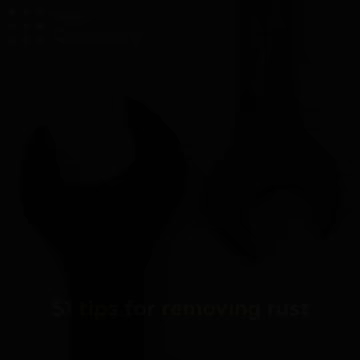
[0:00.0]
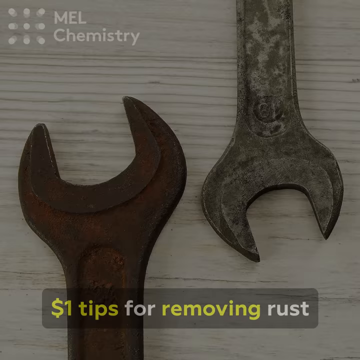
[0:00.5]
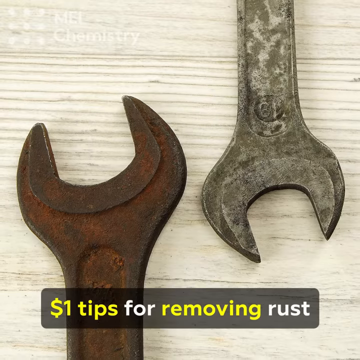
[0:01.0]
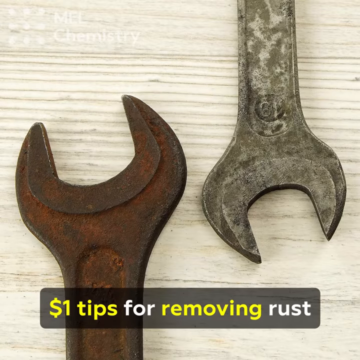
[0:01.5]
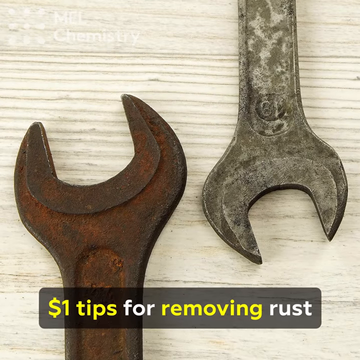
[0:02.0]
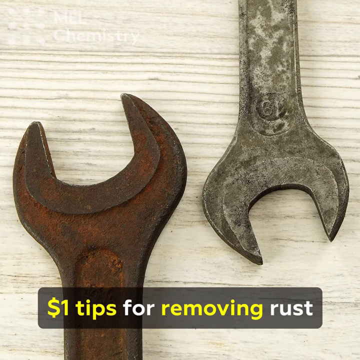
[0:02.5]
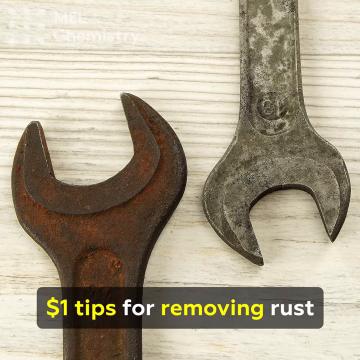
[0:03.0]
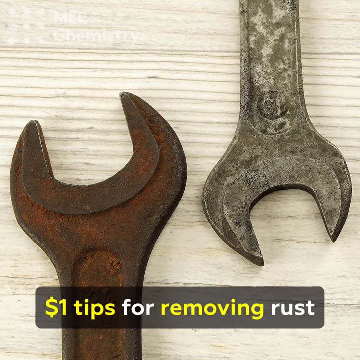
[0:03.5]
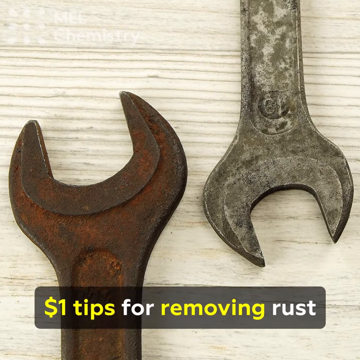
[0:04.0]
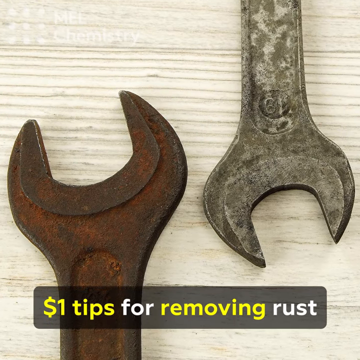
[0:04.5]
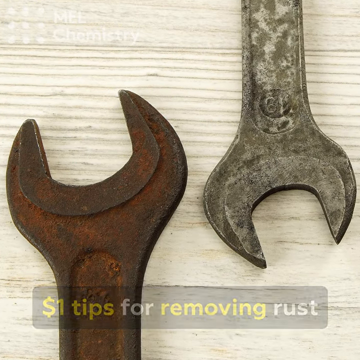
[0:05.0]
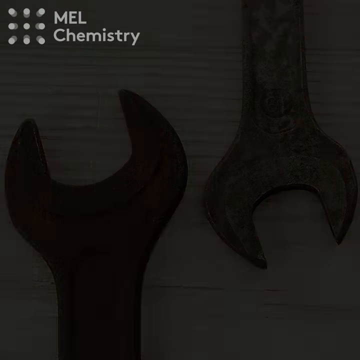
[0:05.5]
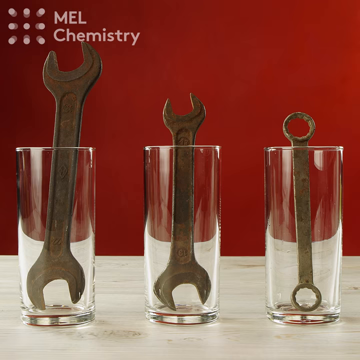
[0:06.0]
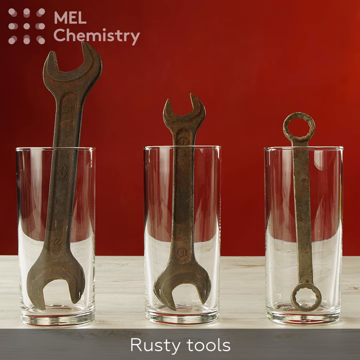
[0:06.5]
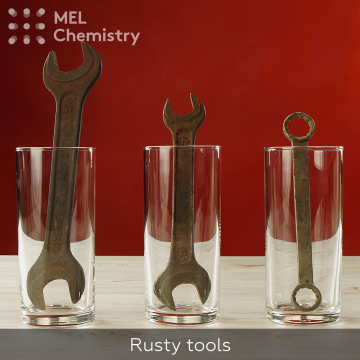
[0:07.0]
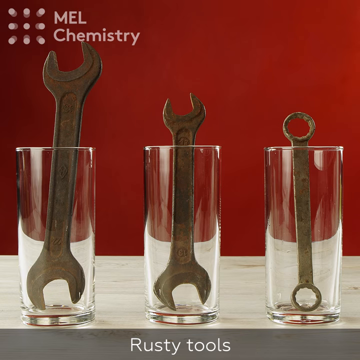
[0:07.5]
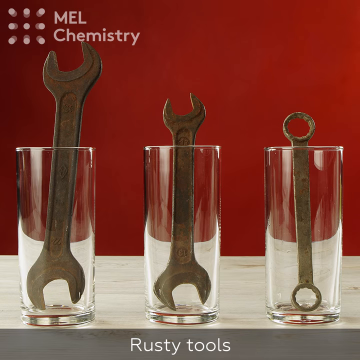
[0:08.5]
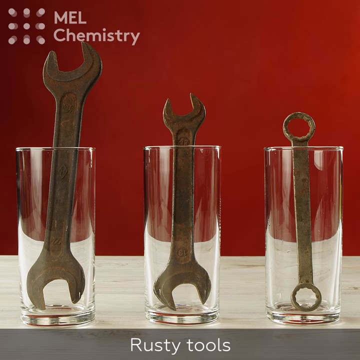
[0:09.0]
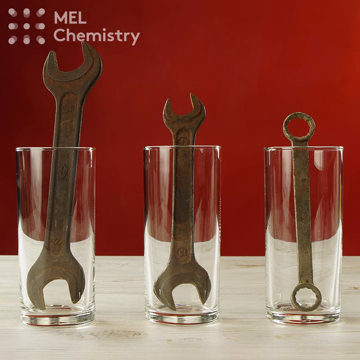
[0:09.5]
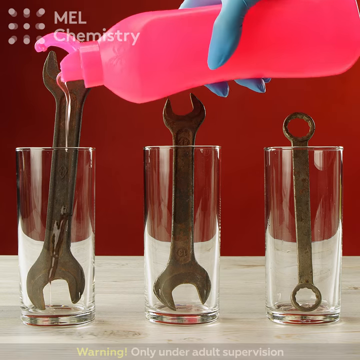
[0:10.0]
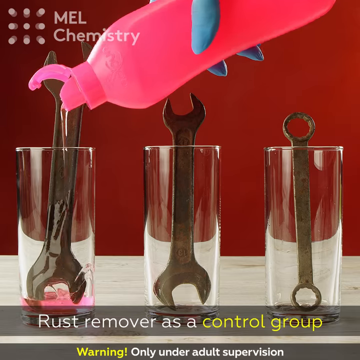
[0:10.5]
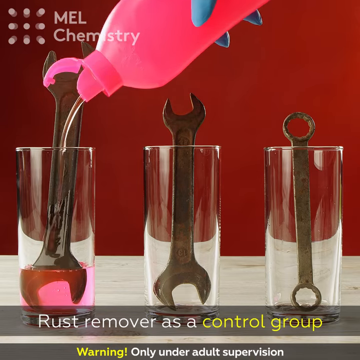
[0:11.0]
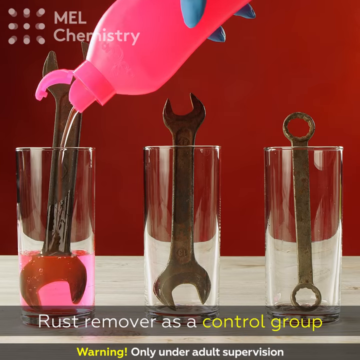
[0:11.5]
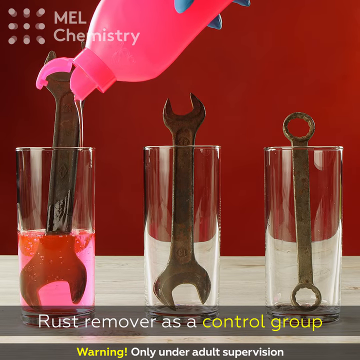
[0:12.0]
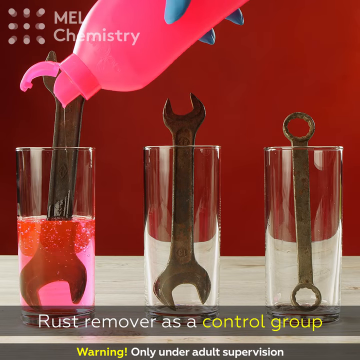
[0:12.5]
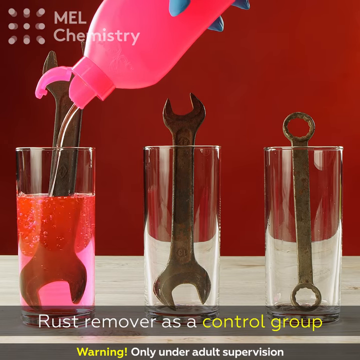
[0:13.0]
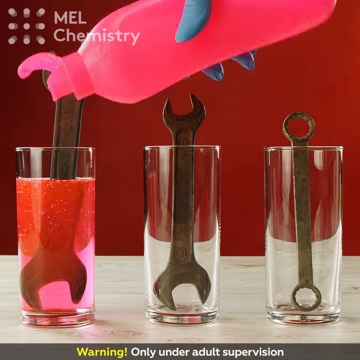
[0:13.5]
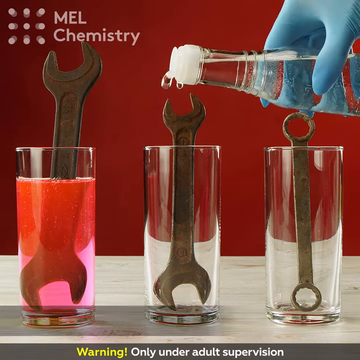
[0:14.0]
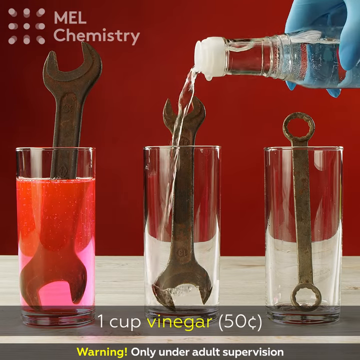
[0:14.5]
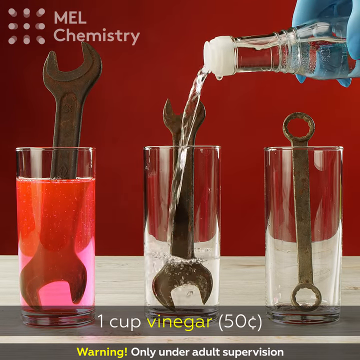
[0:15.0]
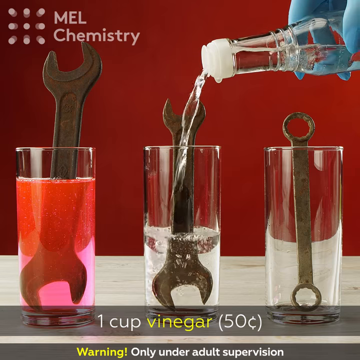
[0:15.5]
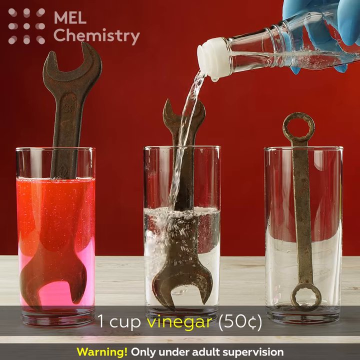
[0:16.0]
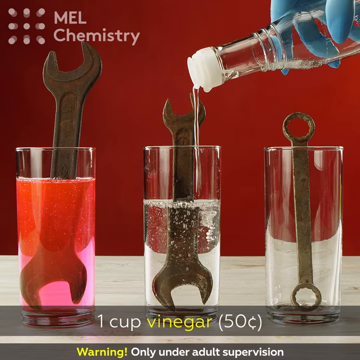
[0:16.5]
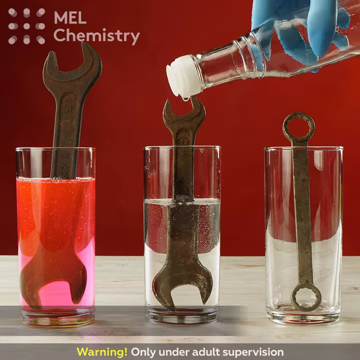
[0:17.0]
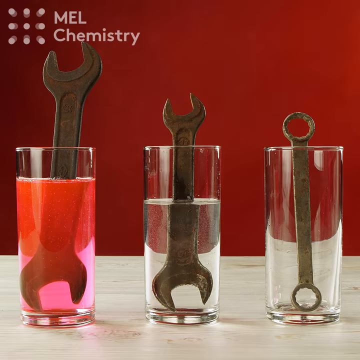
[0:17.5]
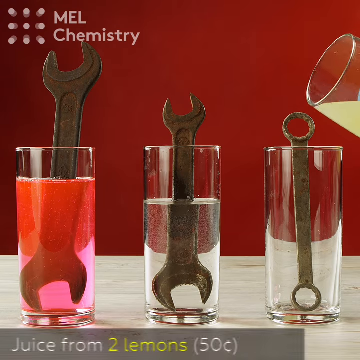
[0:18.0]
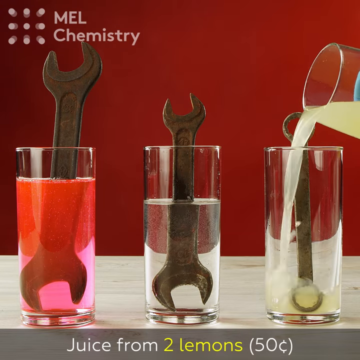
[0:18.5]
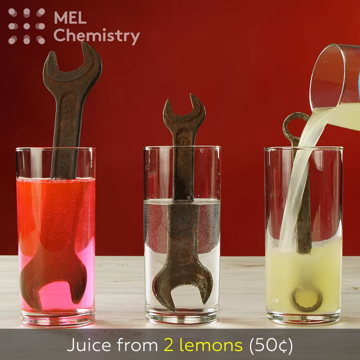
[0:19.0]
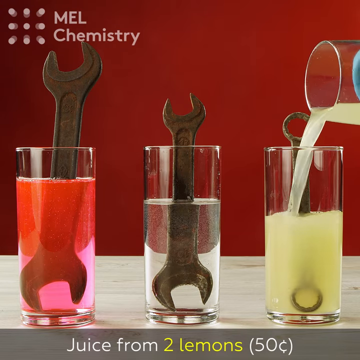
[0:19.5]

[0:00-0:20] The video is titled $1 tips for removing rust. Three heavily oxidized wrenches stand inside three tall, narrow glasses: two are two-sided open-ended wrenches and the third is closed-end. The logo for MEL Chemistry is in the upper left-hand corner, and text reads "warning, only under adult supervision." Early on there are close-ups of the wrenches on top of either a wood board or a wooden table. A person wearing blue lab gloves or cleaning gloves pours liquids into the glasses. The first glass seems to be filled with something pink, apparently some sort of detergent. The second liquid is clear, maybe vinegar, poured from a bottle with a sort of pour spout on top. The third is a yellow liquid that looks like it could possibly be lemonade, though it could be something else. Everything takes place on a white tabletop in front of a red painted wall.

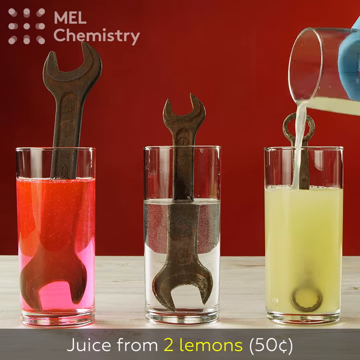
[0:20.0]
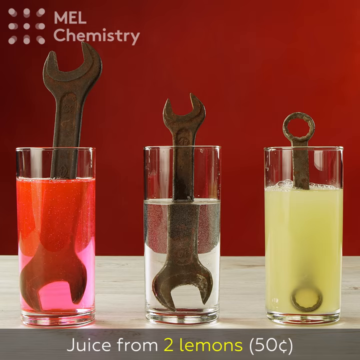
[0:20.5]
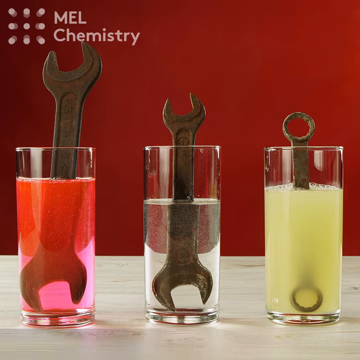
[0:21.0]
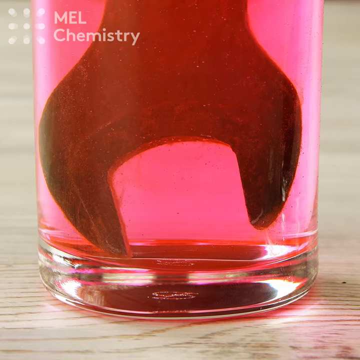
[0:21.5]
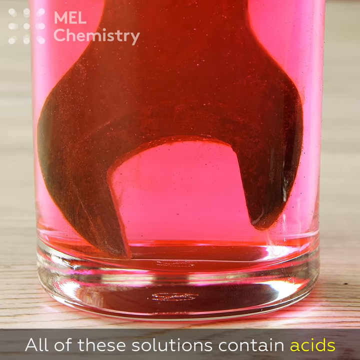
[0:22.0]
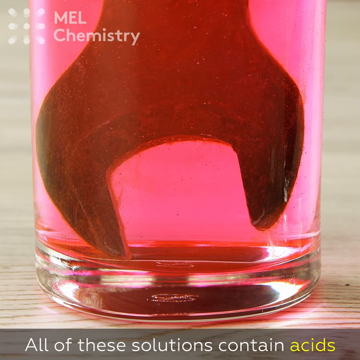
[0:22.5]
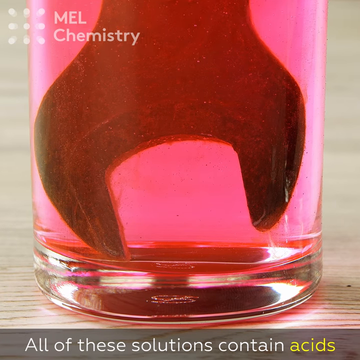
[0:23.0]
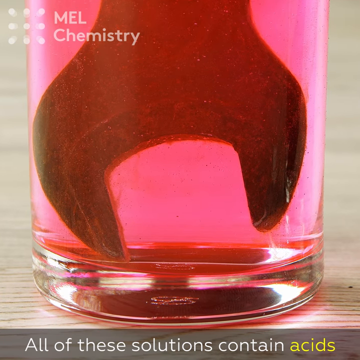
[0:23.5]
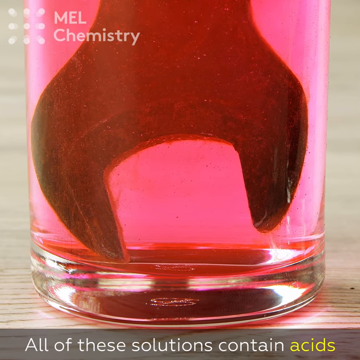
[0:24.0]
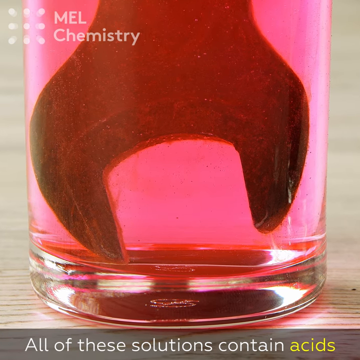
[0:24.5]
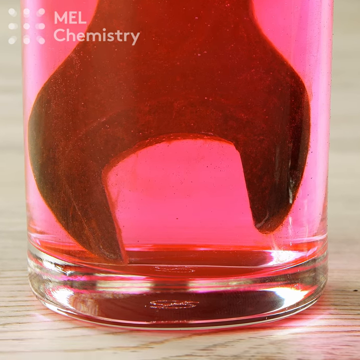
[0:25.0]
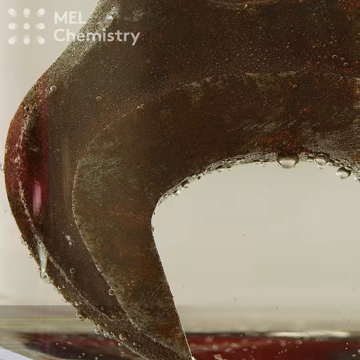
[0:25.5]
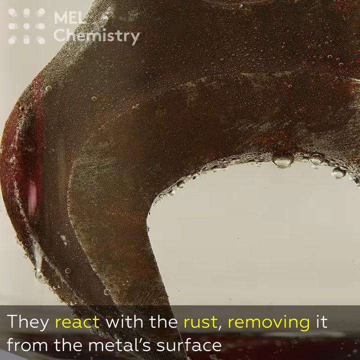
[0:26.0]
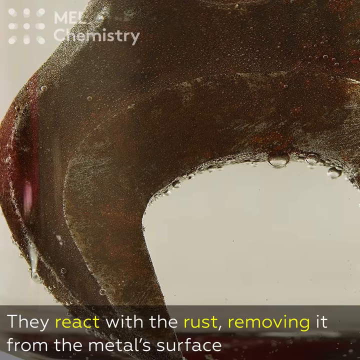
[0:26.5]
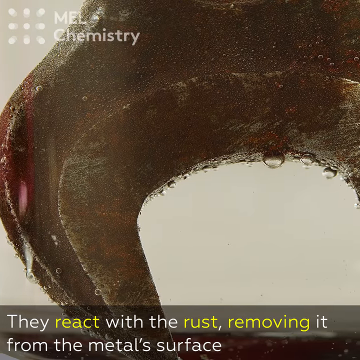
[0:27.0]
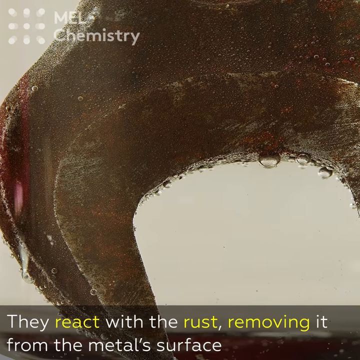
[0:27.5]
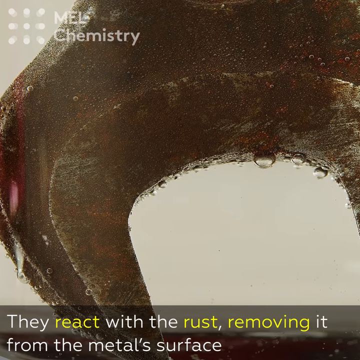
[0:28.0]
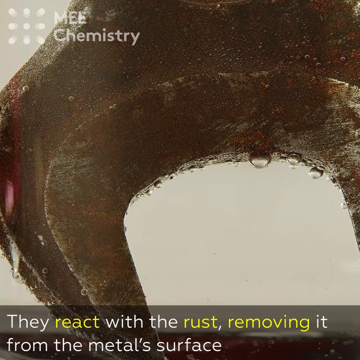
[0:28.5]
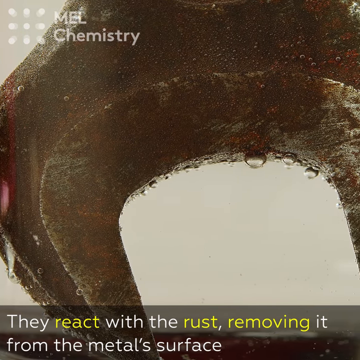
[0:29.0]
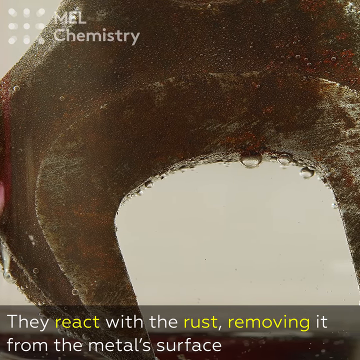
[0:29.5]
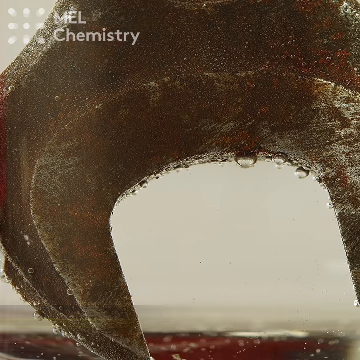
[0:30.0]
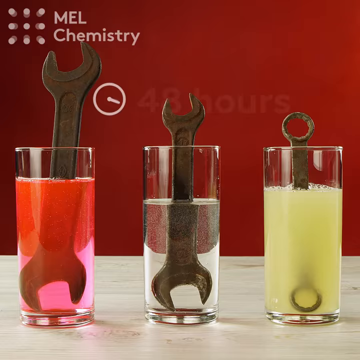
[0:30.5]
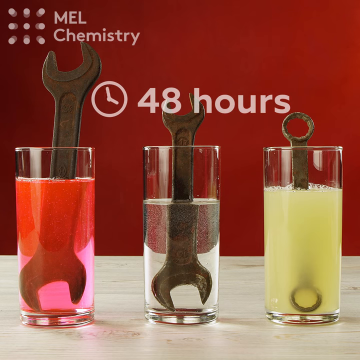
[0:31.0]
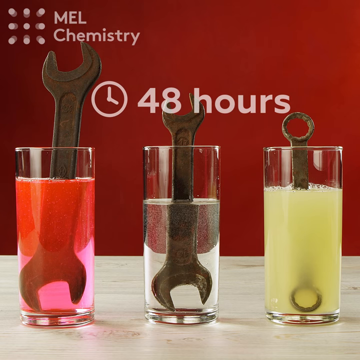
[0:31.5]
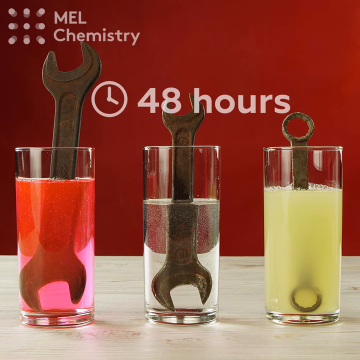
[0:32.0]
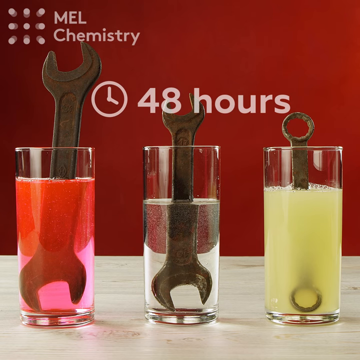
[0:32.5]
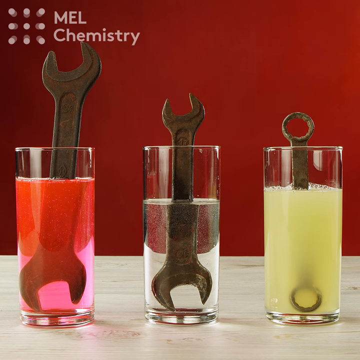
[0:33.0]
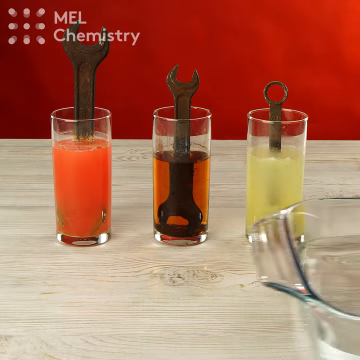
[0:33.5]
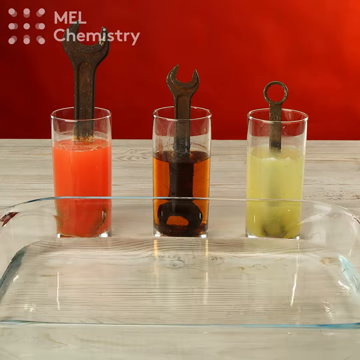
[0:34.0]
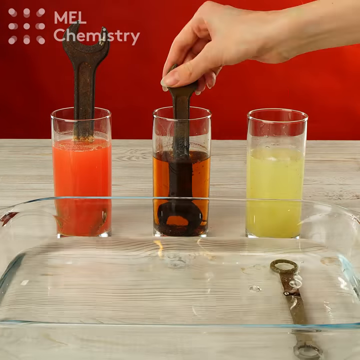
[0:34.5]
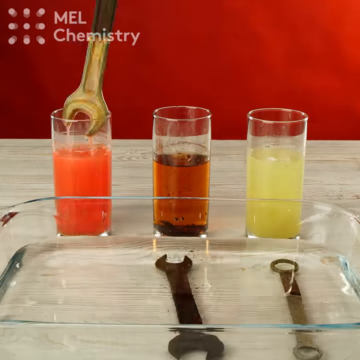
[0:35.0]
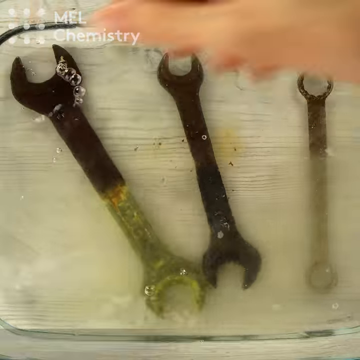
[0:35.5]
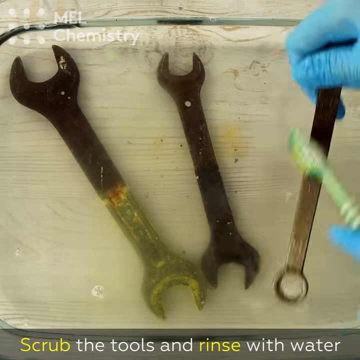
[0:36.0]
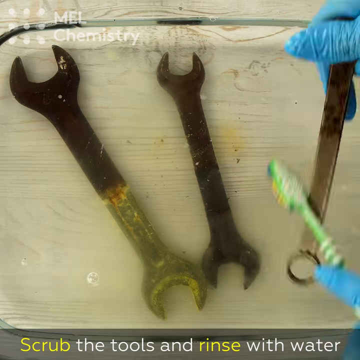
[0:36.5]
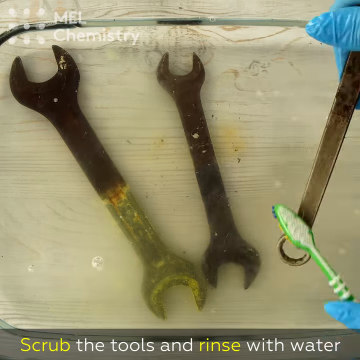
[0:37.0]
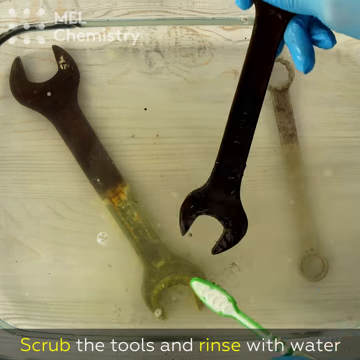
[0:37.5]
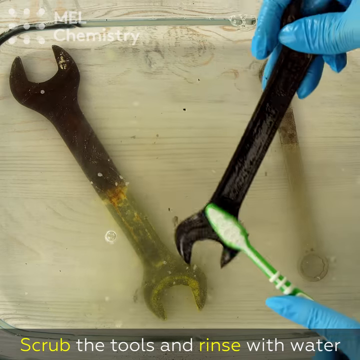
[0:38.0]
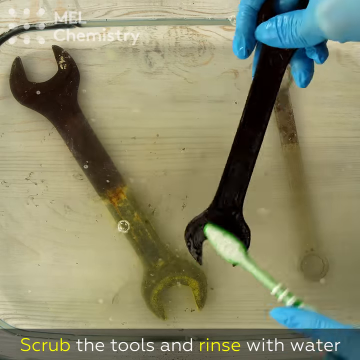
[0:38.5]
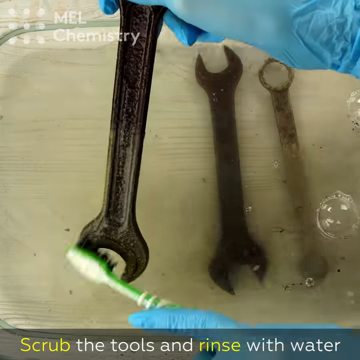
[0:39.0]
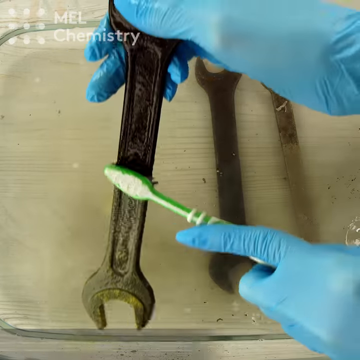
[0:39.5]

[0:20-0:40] A close-up shows the wrench in the pink liquid, which seems to have stuff coming off of it. A close-up of the wrench in the clear liquid follows, and it seems to have bubbles coming off it. There is no real close-up of the one in the yellow liquid. Shortly after, text across the screen indicates 48 hours have passed, and all three wrenches are removed from their glasses and laid into a sort of Pyrex glass cooking dish, set in a clear liquid, possibly water. From a top-down view, the person scrubs along the wrenches with a toothbrush. The largest wrench, the one from the pink liquid, shows the clearest demarcation between the rust line and the part cleaned in the fluid. The center one, from the clear fluid, shows the biggest change in the fluid itself: after soaking, the liquid has turned brown or maybe a dark orange.